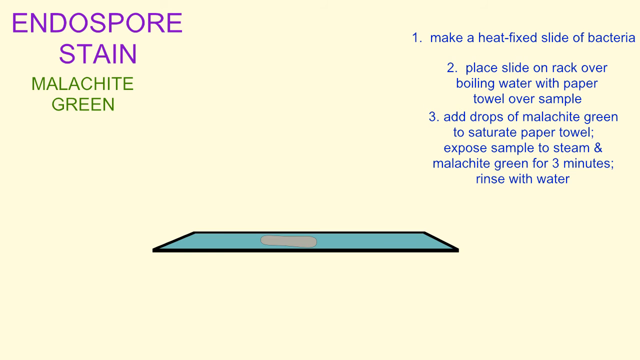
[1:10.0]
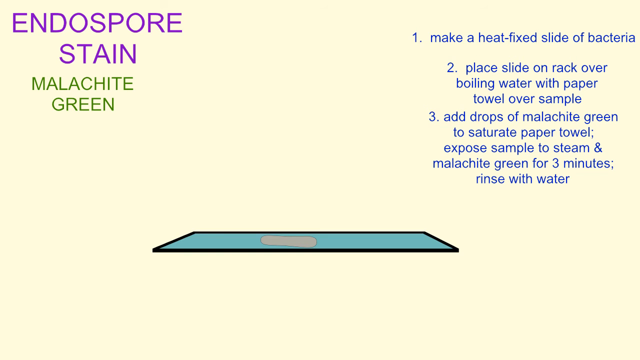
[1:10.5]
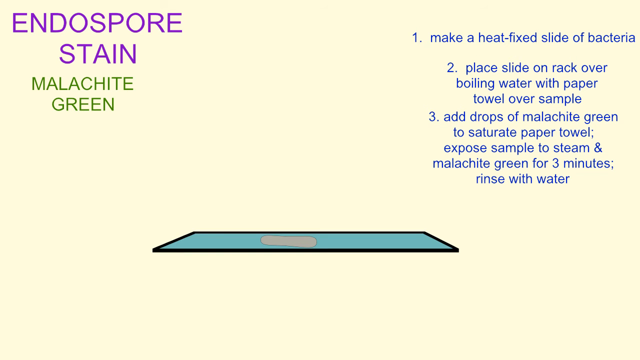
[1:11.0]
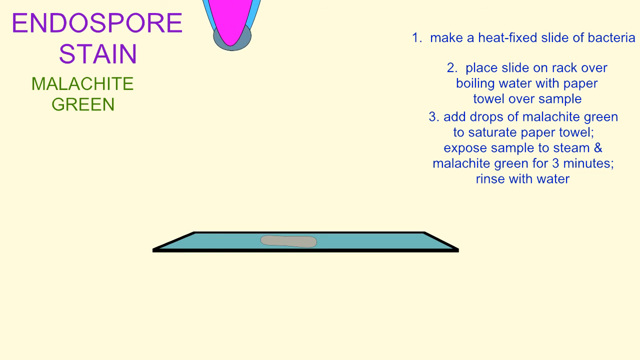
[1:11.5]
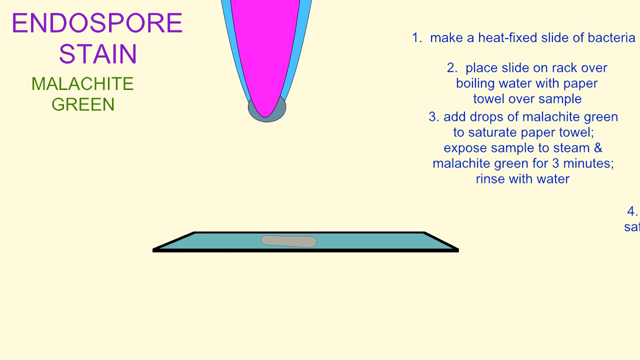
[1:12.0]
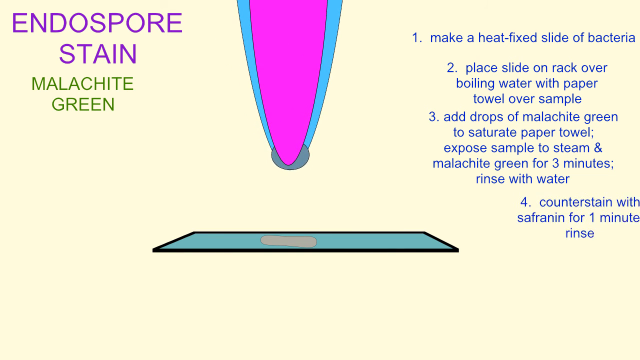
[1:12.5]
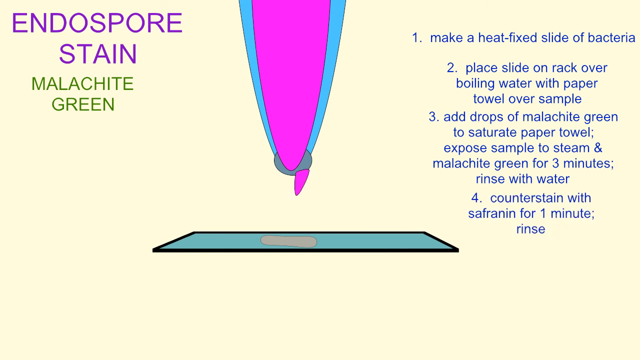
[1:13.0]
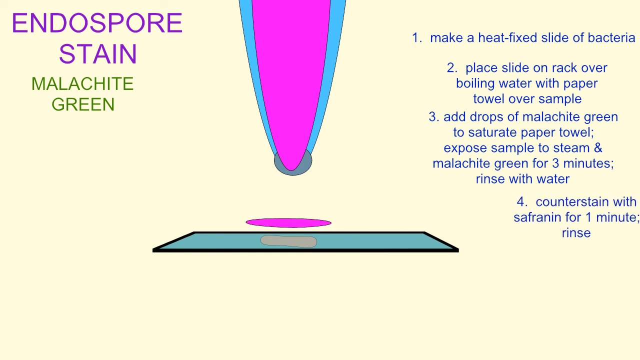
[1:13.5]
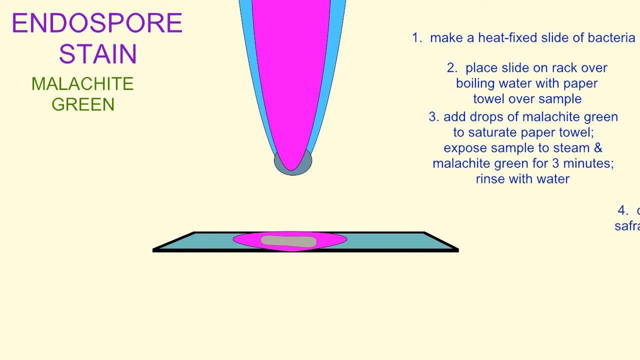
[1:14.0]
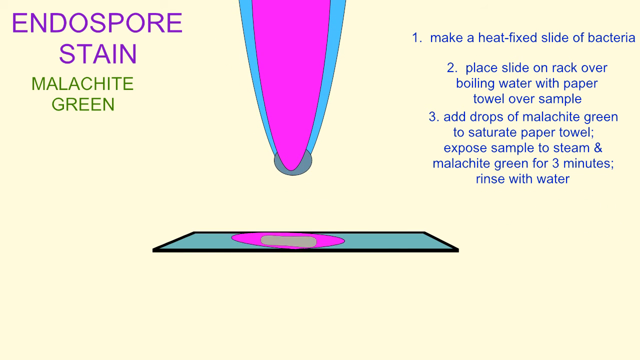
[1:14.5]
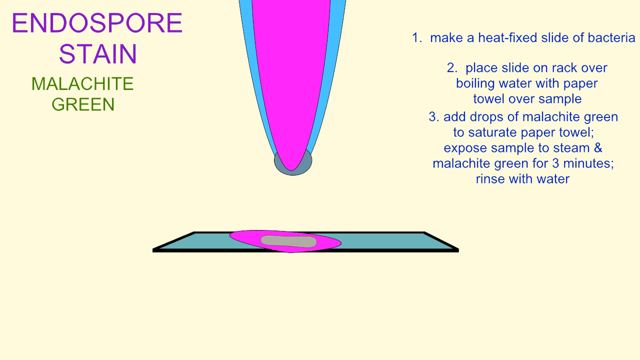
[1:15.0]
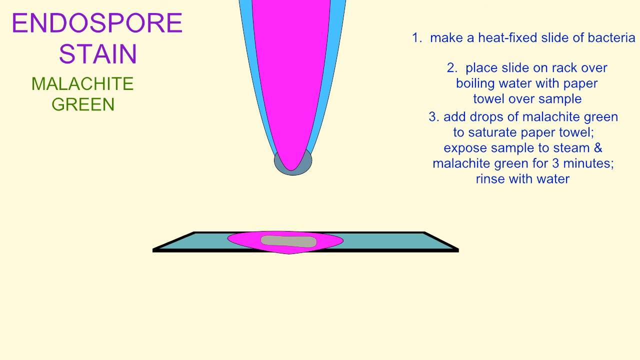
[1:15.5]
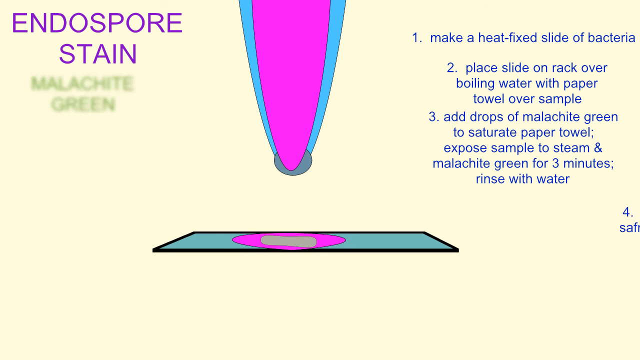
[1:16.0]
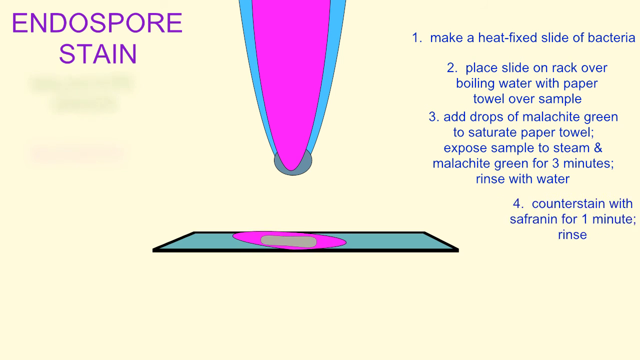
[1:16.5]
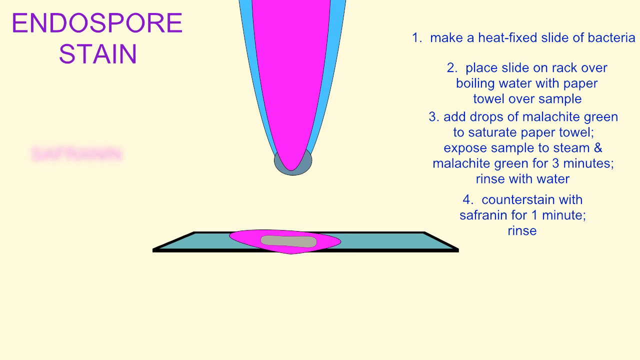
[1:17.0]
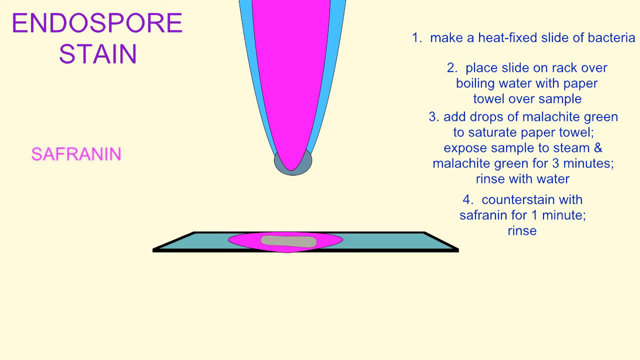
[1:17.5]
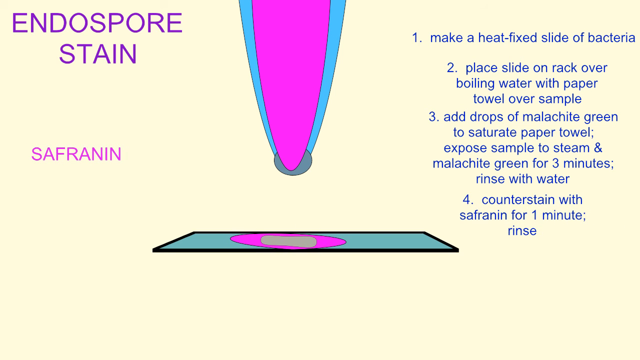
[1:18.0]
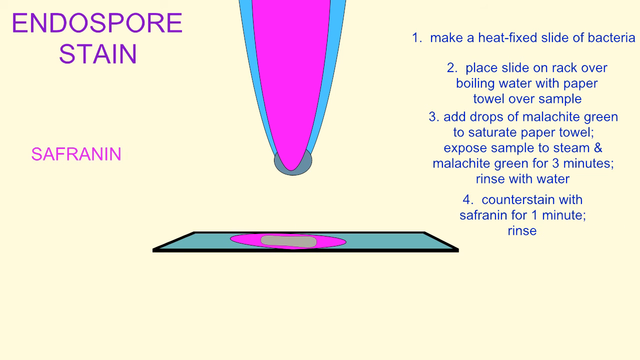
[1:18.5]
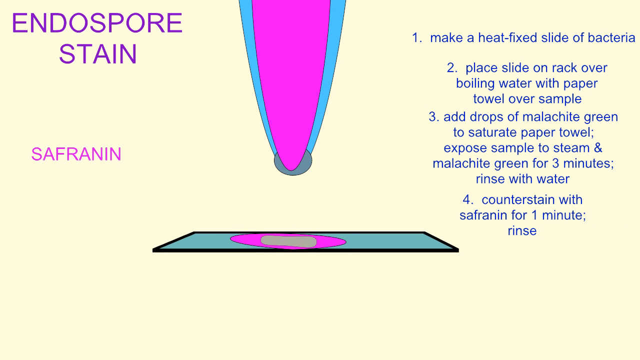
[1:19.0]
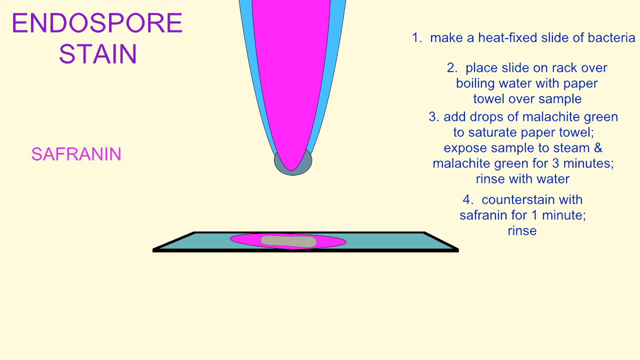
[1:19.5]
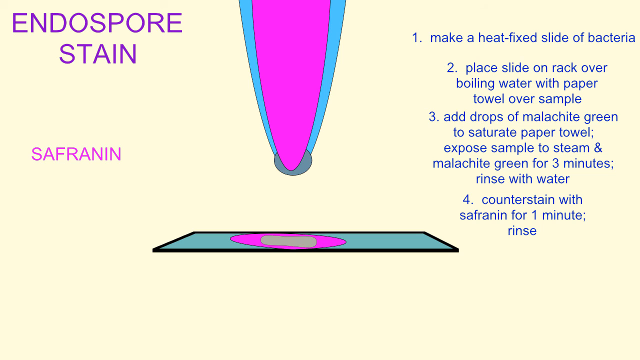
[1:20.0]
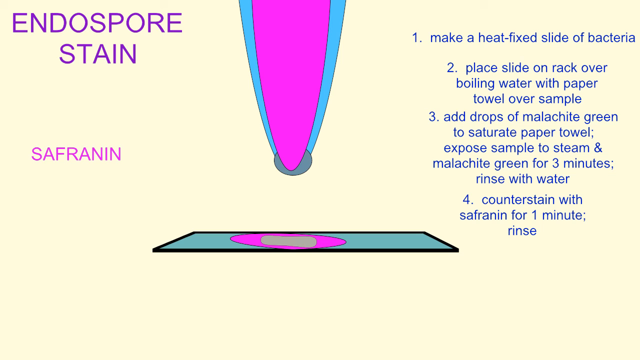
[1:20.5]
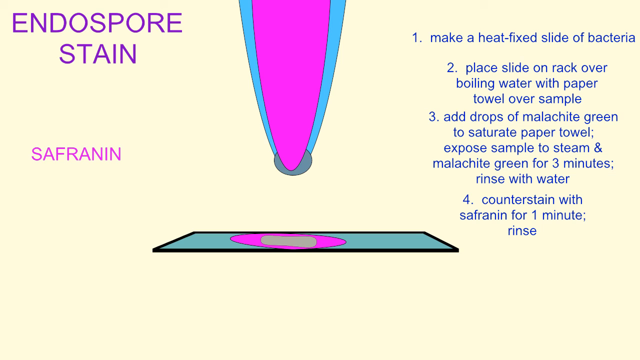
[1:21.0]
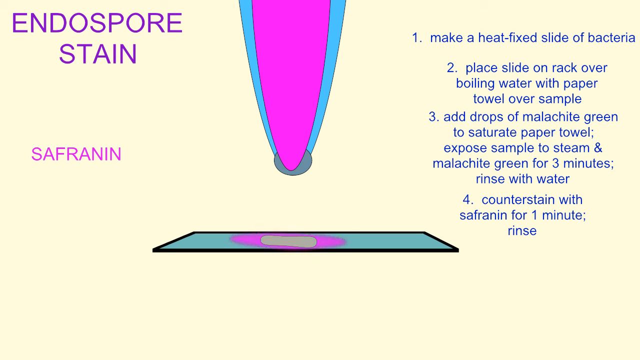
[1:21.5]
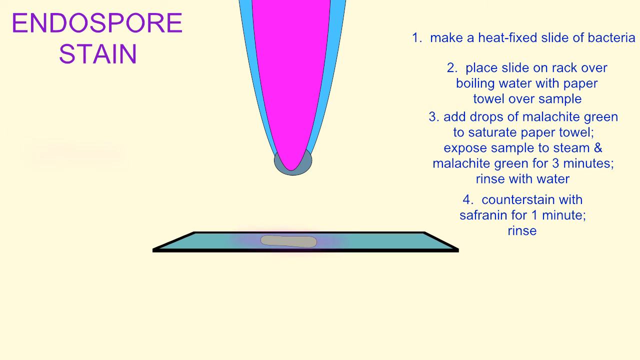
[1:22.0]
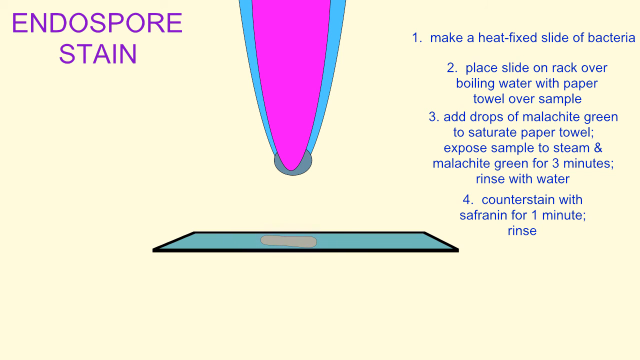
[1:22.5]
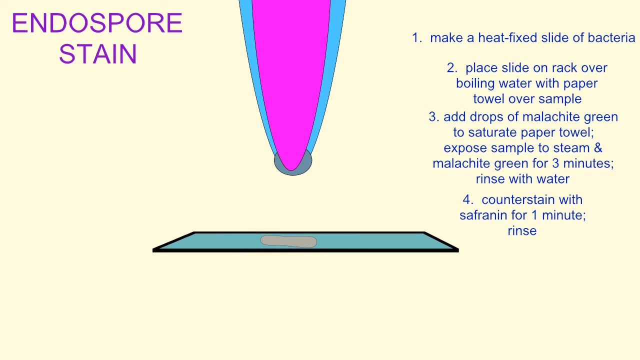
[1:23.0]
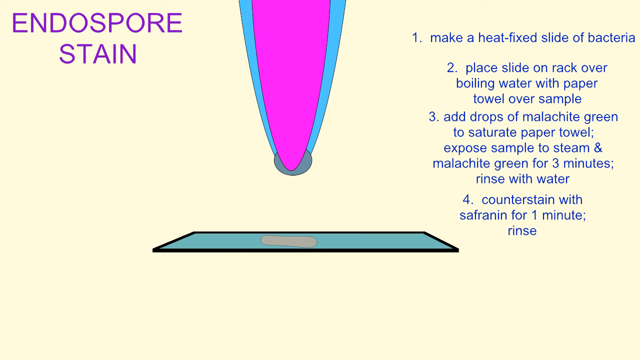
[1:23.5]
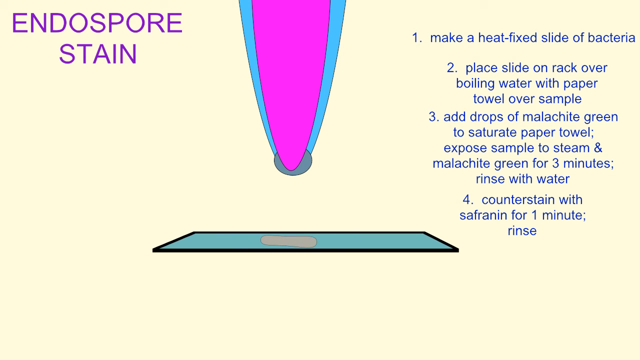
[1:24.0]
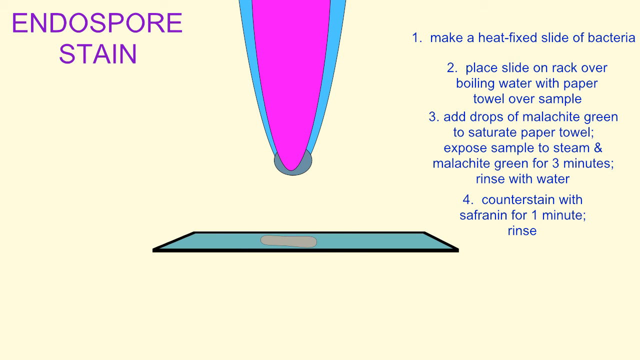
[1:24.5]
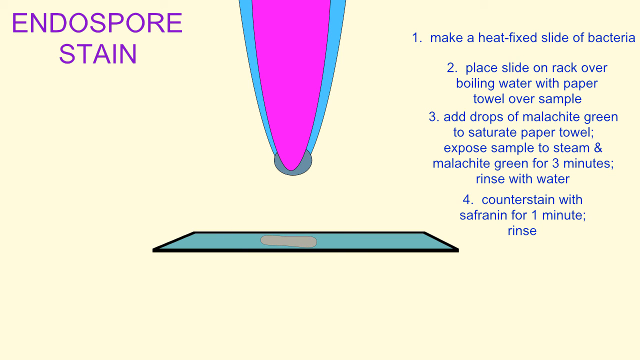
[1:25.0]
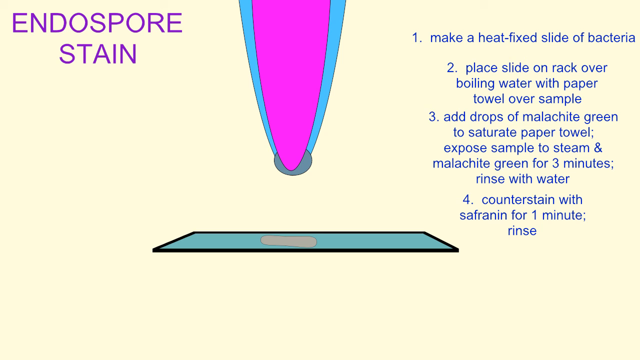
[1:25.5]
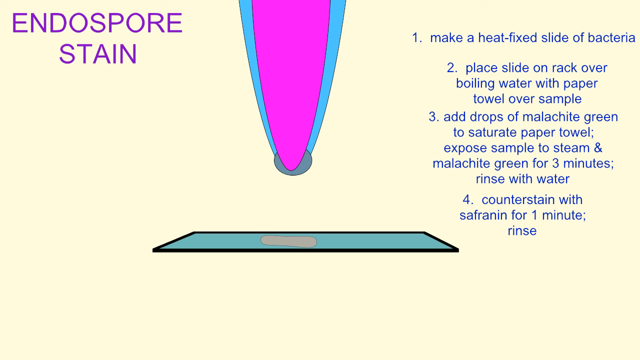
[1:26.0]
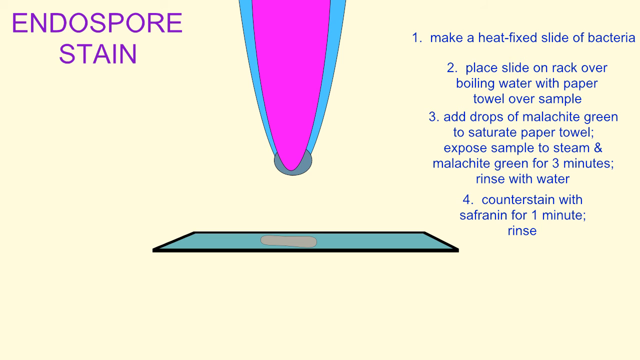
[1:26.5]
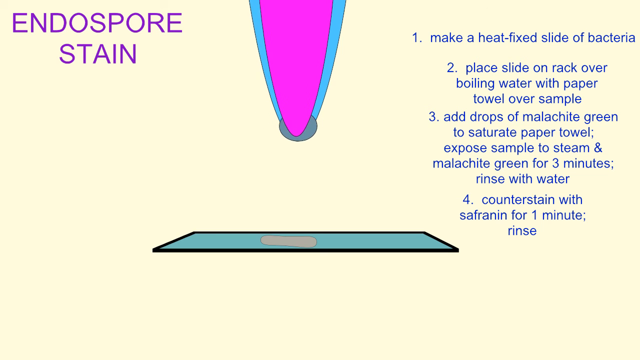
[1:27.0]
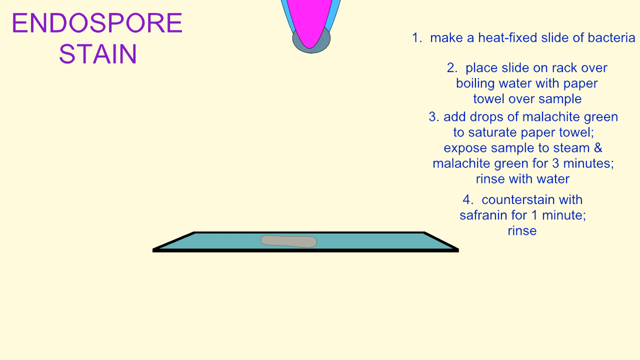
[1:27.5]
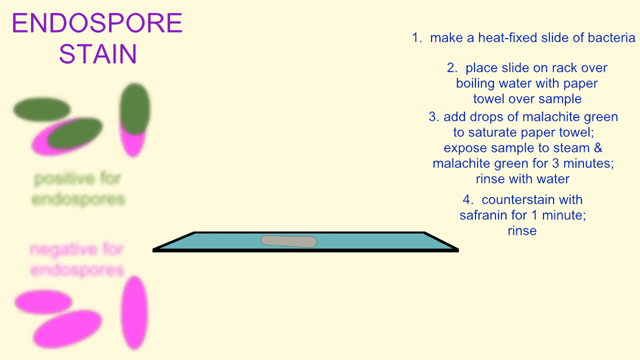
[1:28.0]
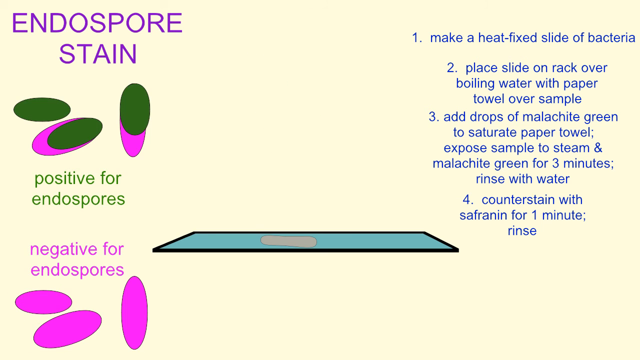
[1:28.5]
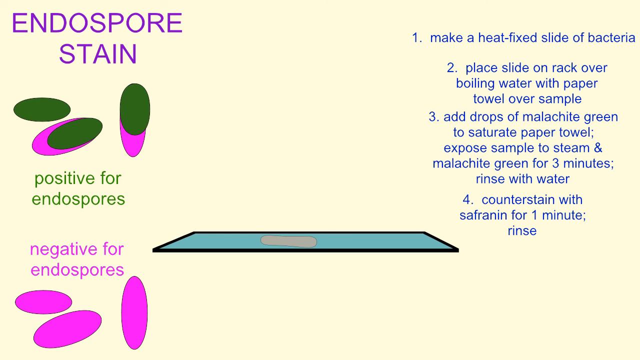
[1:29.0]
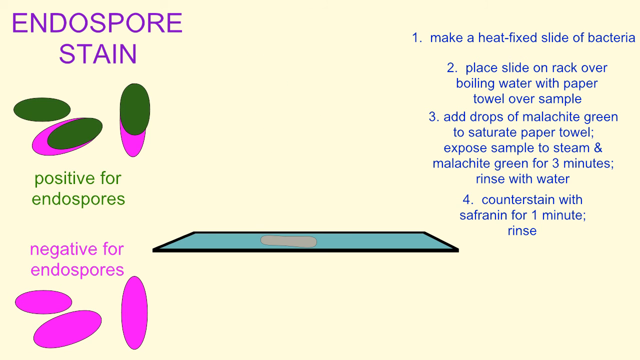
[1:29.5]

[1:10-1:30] The heat fixed slide is shown with the bacteria on it; the bacteria is represented by a gray object, and the slide is light teal blue. In the upper left corner, "endospore stain" remains in all uppercase purple letters, with "malachite green" underneath. On the right, in blue, the first three steps of the experiment remain. A purple and blue object with something gray in between comes down, and the purple goes underneath the gray bacteria object. At that point a number four appears on the slide with the text "counter stain with safranin for one minute and rinse." The purple object then disappears, and green and purple ovals appear on the left. In green, text reads "positive for endospores," and underneath it in purple, "negative for endospores."